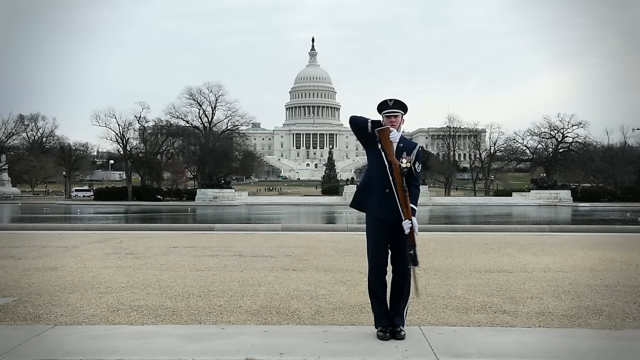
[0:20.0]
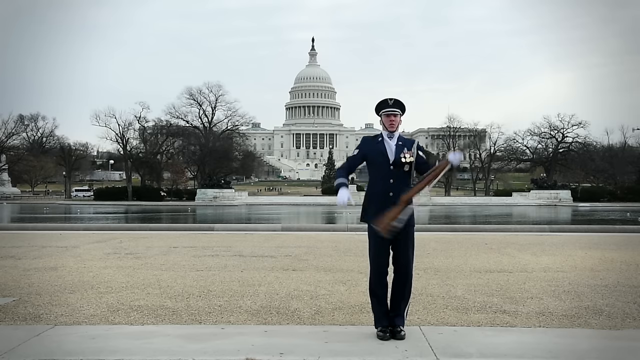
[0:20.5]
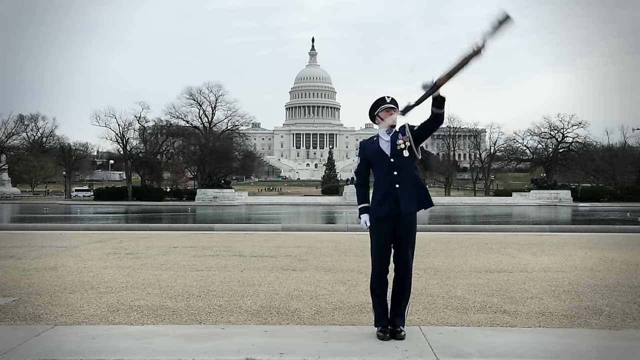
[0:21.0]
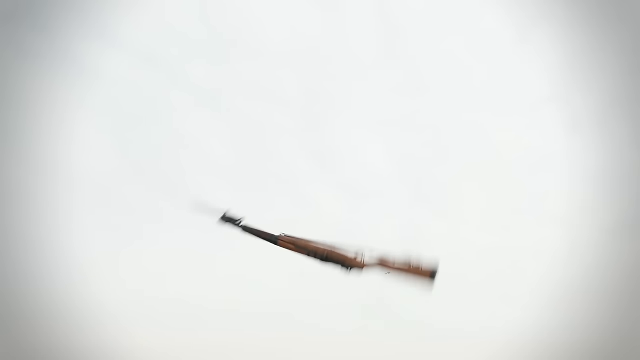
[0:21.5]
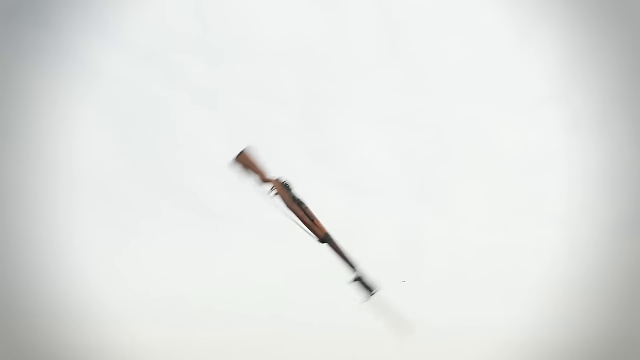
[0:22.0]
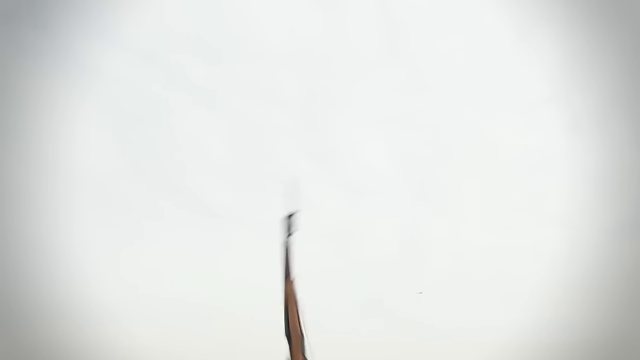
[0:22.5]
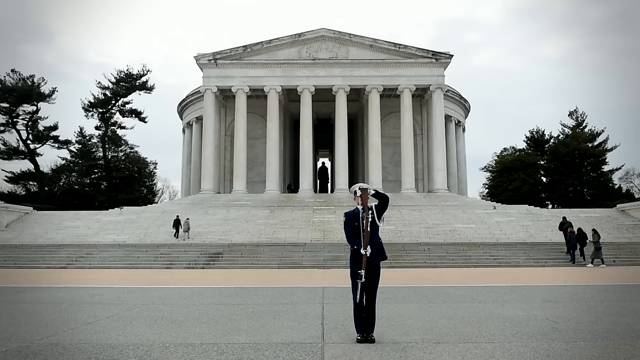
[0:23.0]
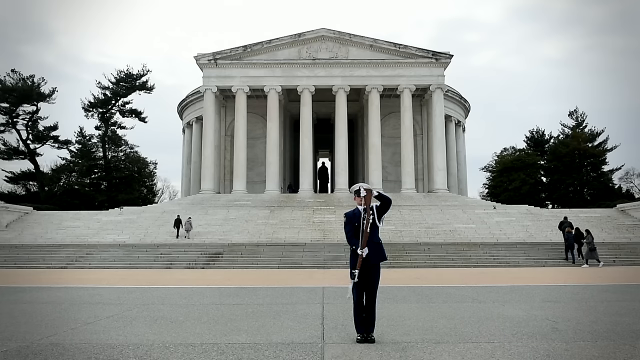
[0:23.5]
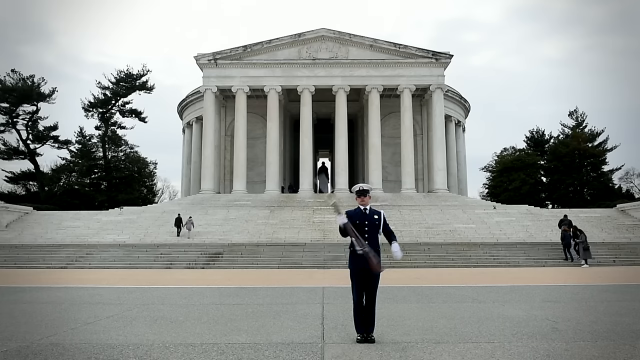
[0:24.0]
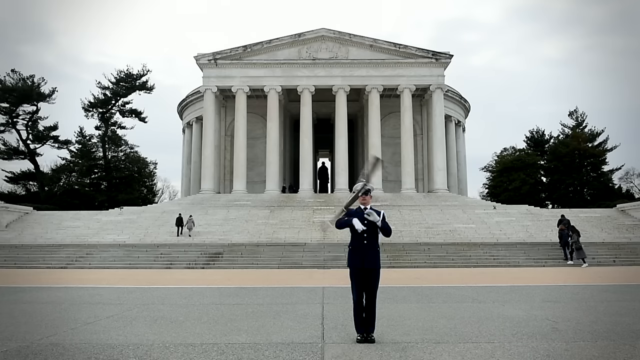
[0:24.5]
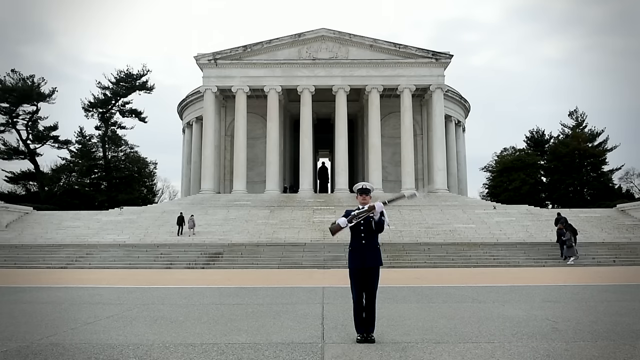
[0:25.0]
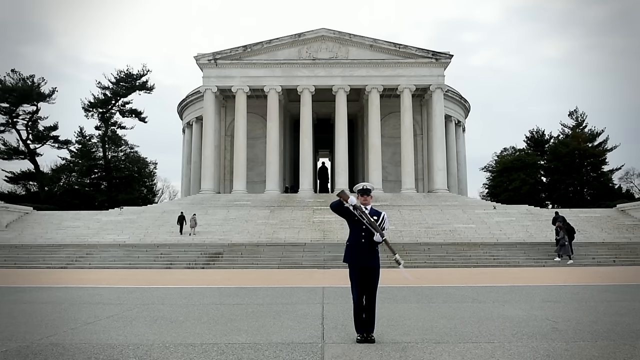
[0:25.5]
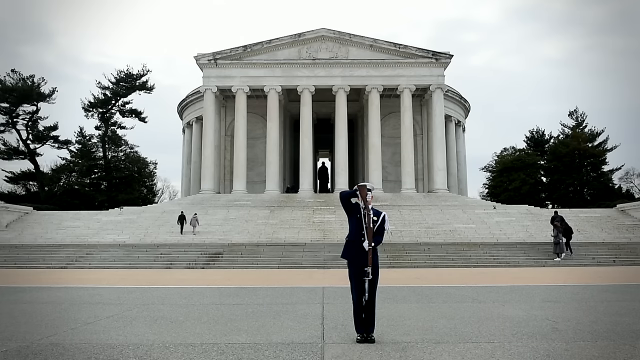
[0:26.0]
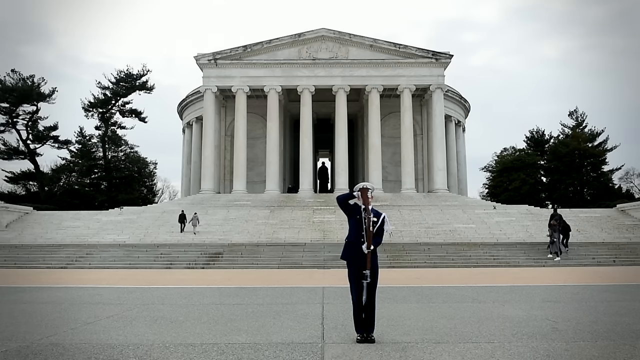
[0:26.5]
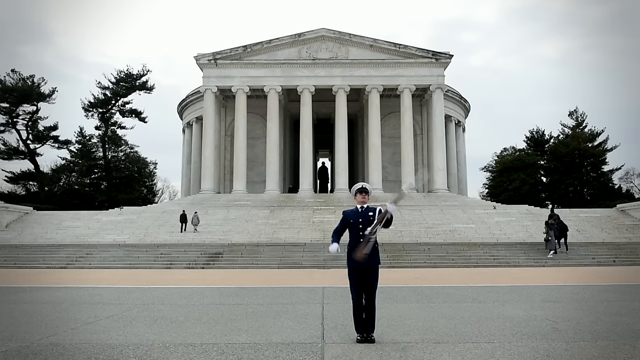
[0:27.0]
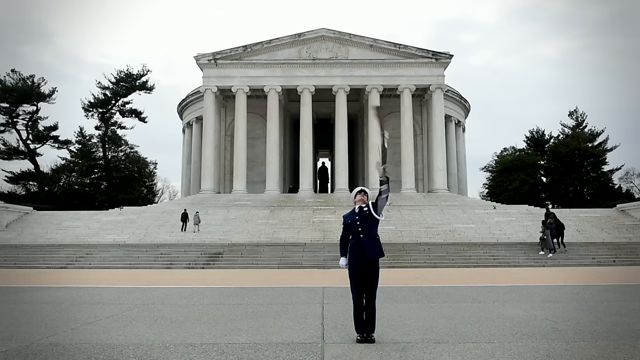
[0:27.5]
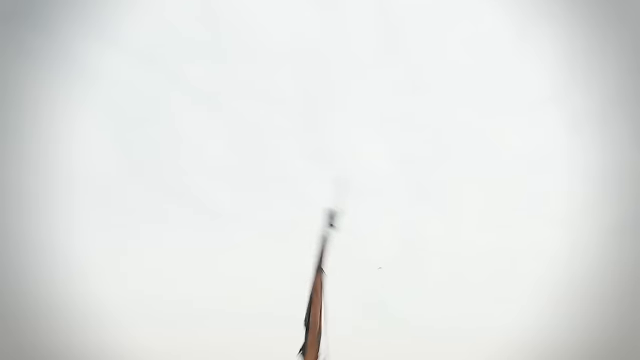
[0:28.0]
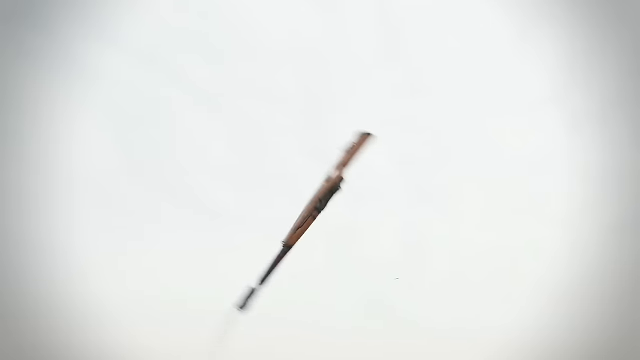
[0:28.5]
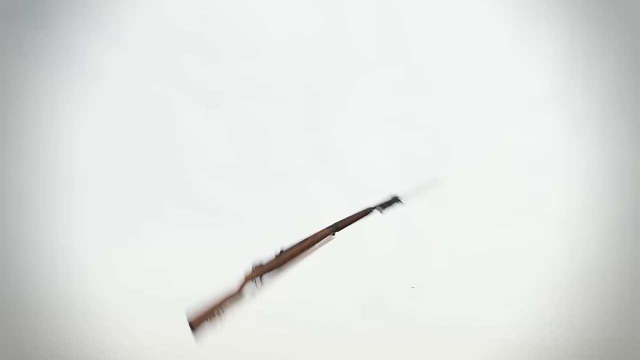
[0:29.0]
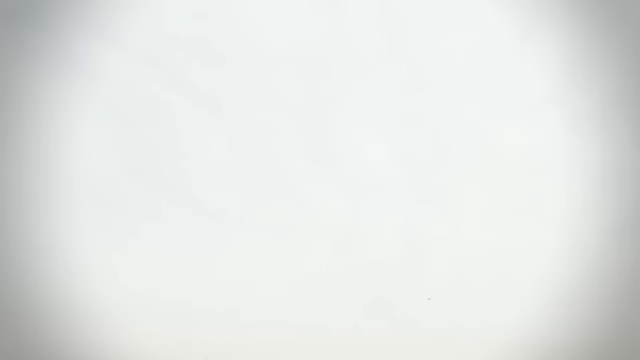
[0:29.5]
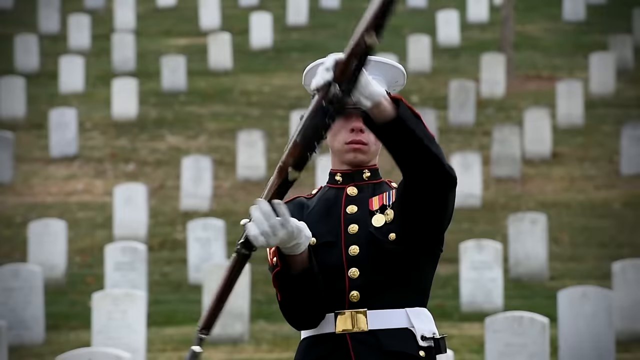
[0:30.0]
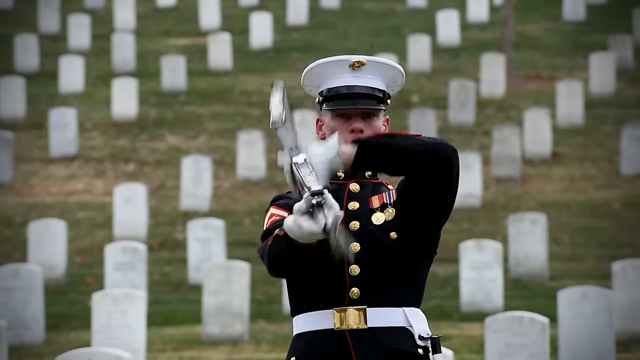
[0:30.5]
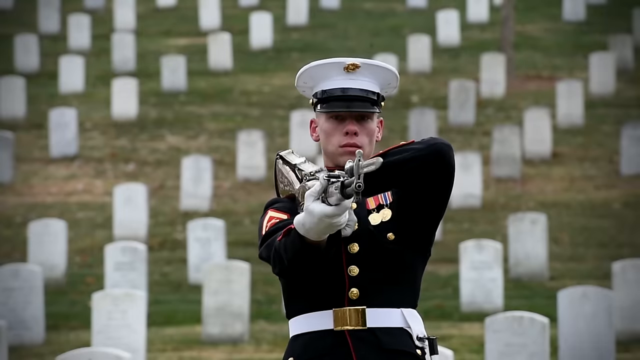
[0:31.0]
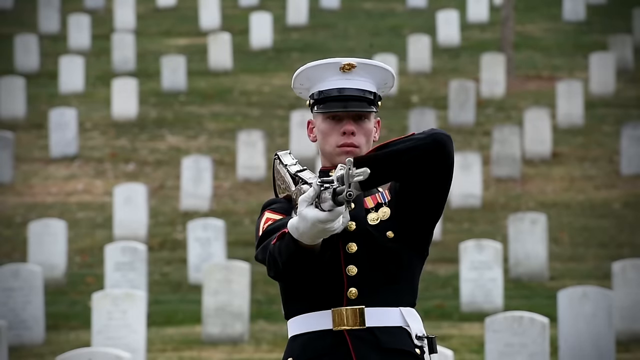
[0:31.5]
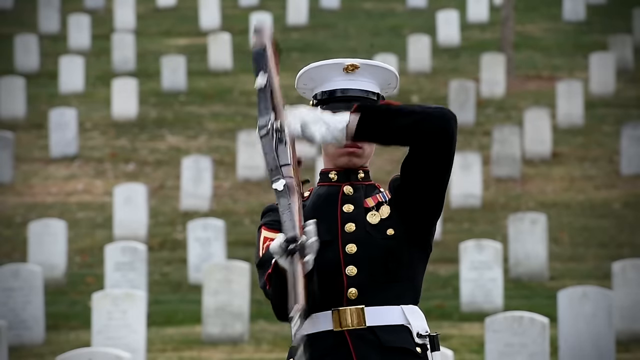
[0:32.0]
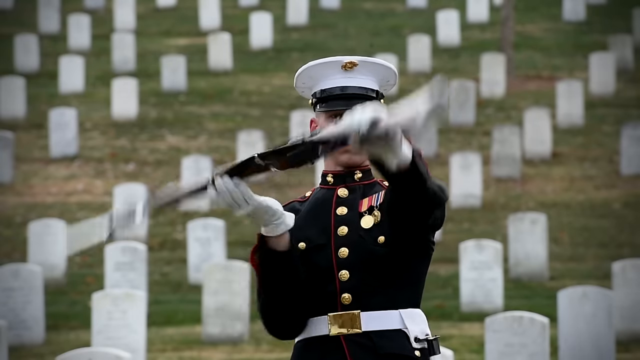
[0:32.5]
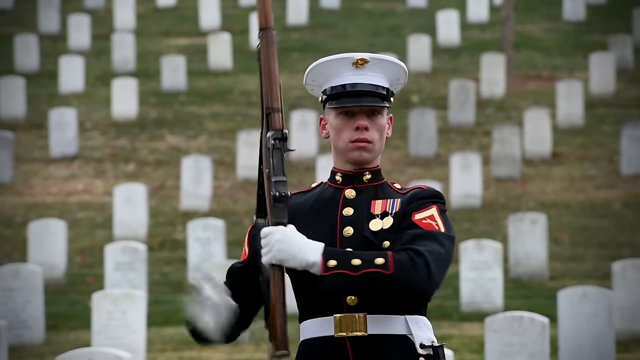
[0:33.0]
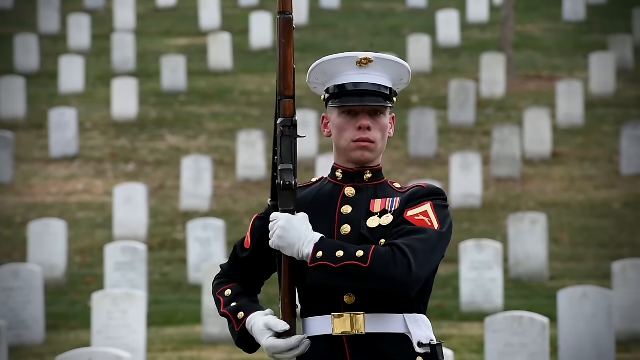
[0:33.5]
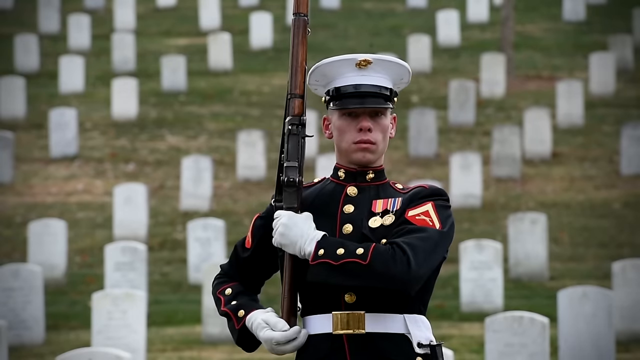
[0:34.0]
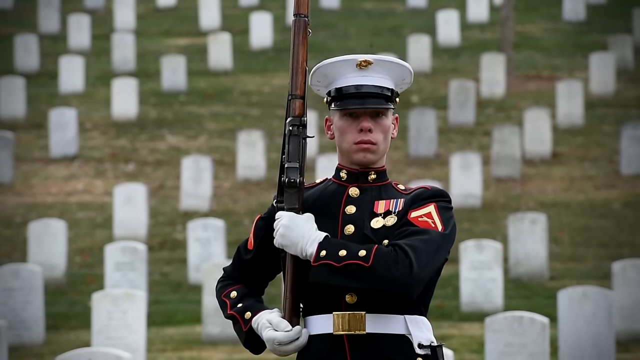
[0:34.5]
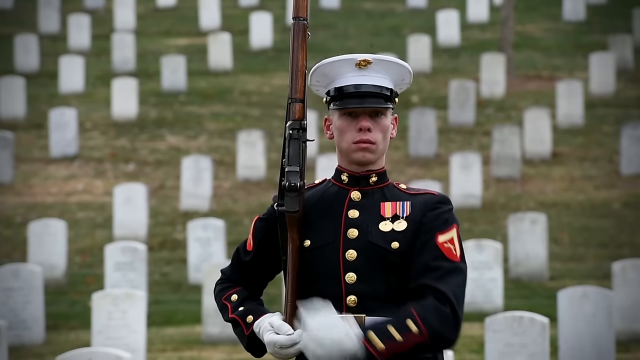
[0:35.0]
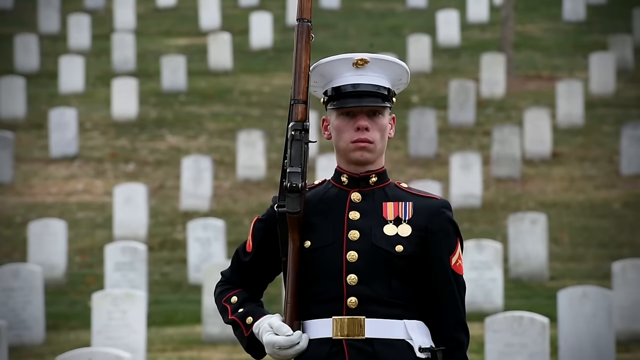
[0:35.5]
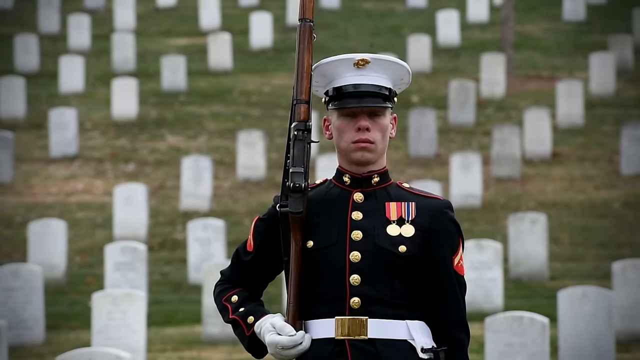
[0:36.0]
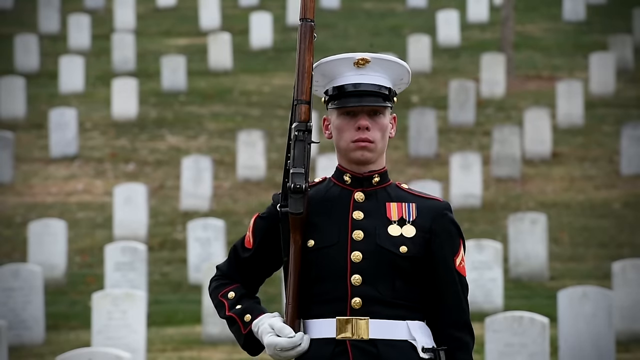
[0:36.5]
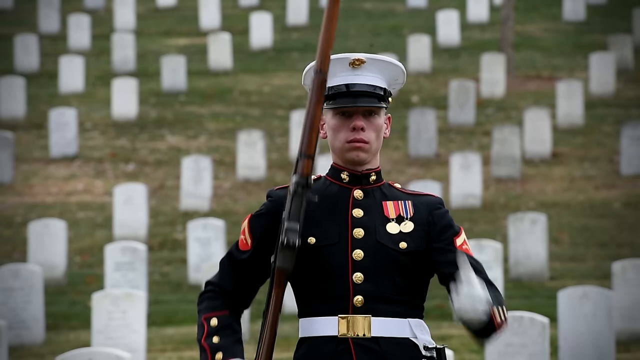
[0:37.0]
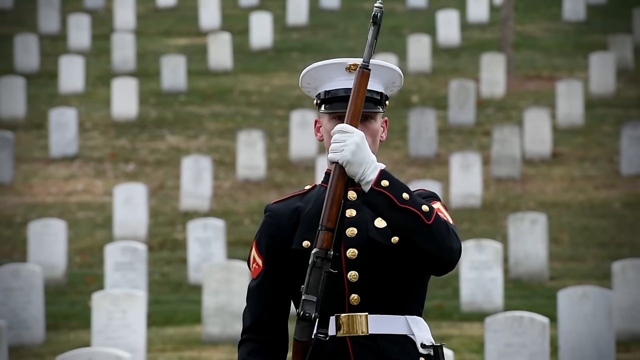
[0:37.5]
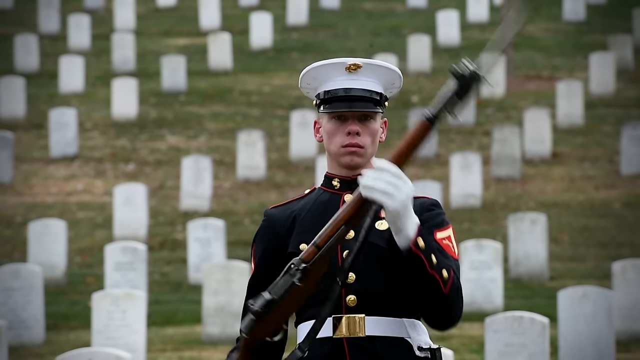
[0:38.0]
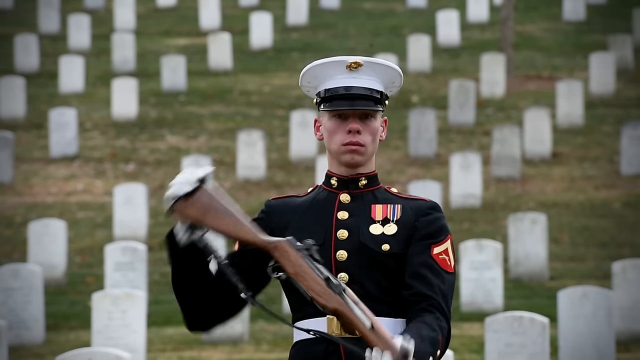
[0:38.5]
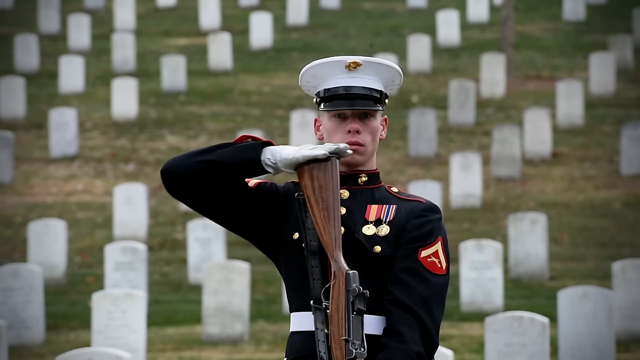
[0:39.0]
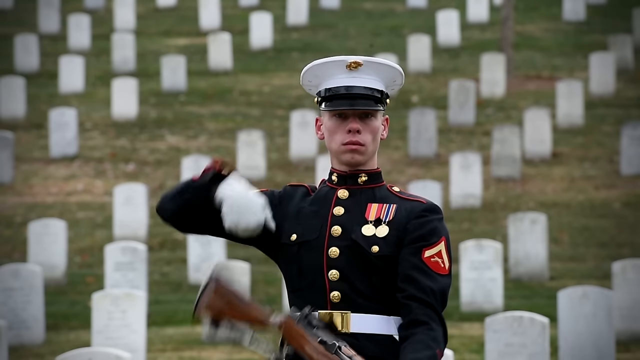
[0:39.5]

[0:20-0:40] Two or three people show their skills by spinning their rifles. Each part of the video is filmed in a different place.